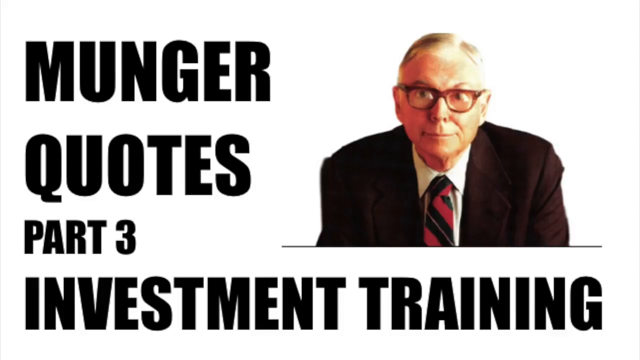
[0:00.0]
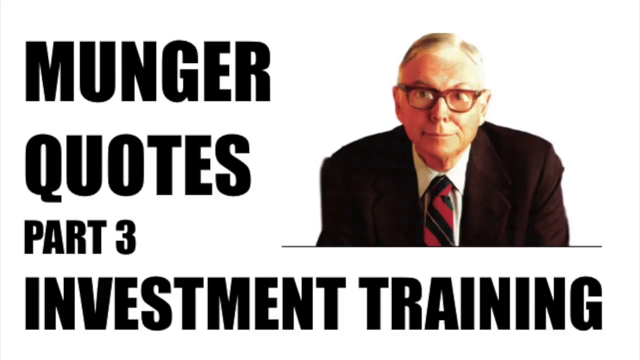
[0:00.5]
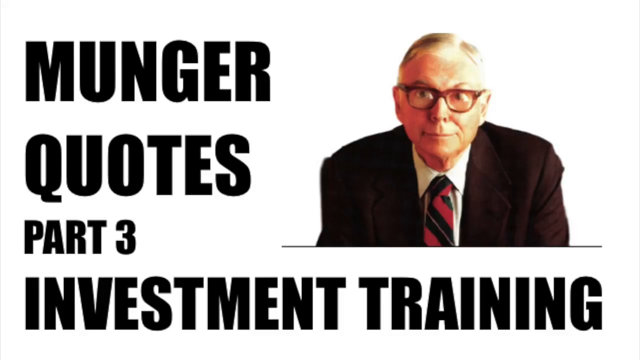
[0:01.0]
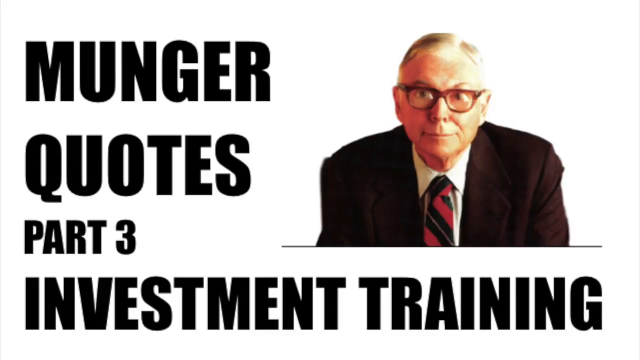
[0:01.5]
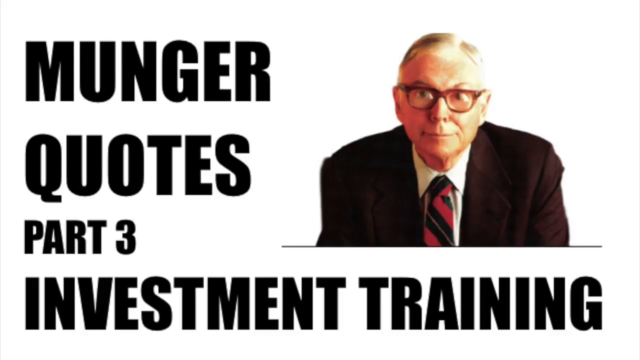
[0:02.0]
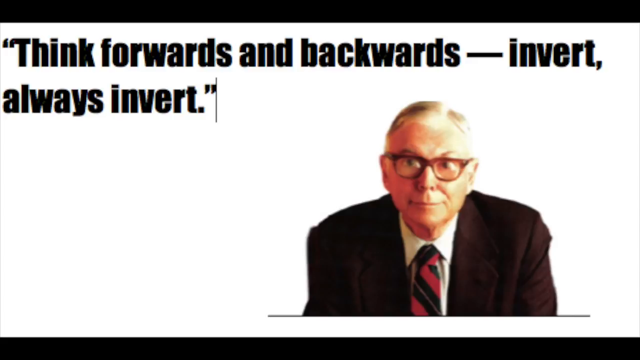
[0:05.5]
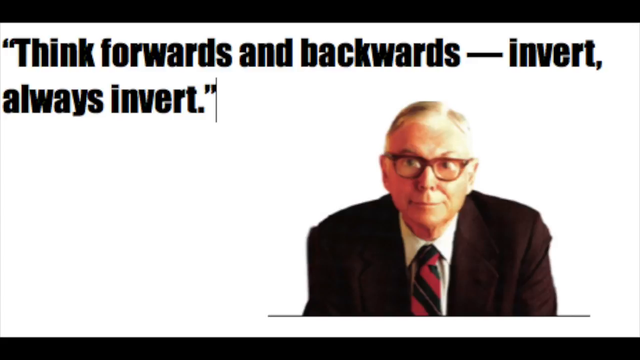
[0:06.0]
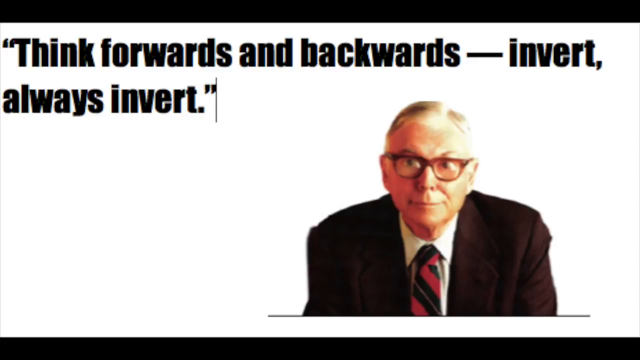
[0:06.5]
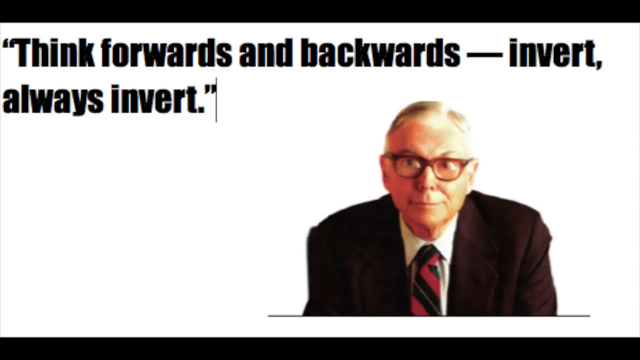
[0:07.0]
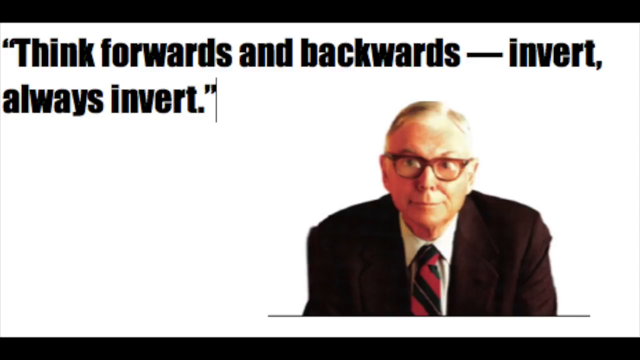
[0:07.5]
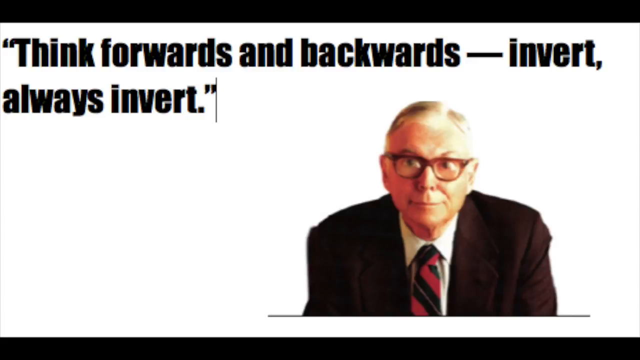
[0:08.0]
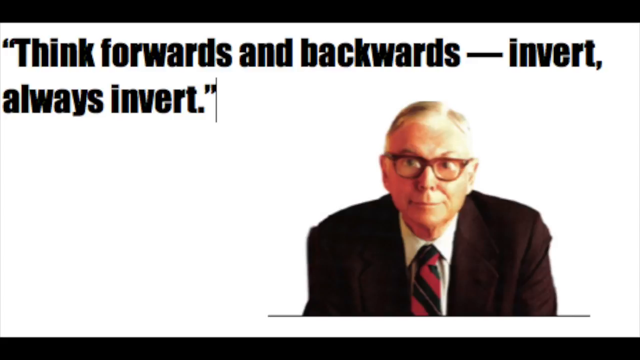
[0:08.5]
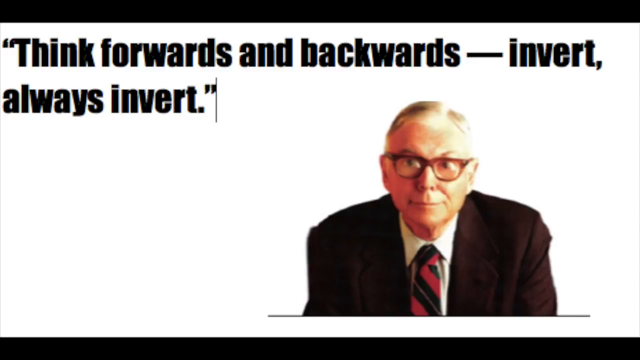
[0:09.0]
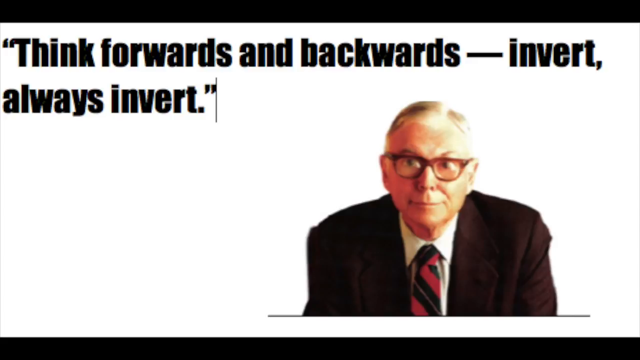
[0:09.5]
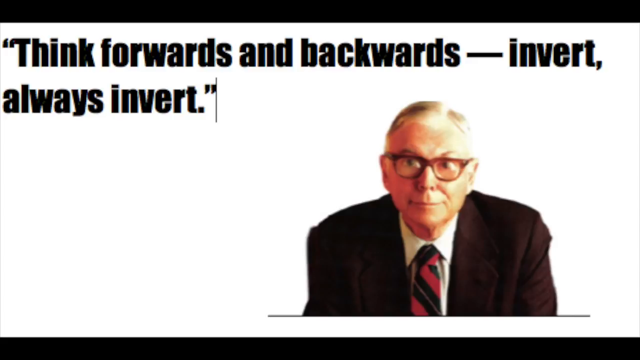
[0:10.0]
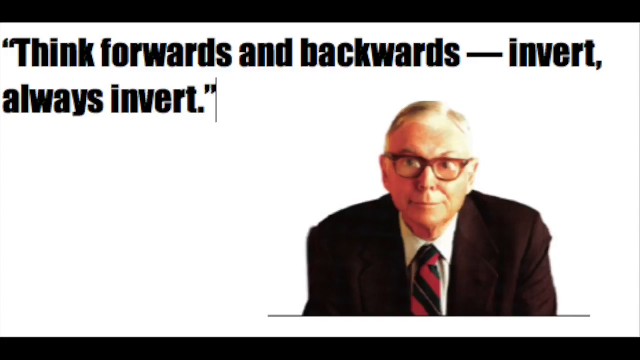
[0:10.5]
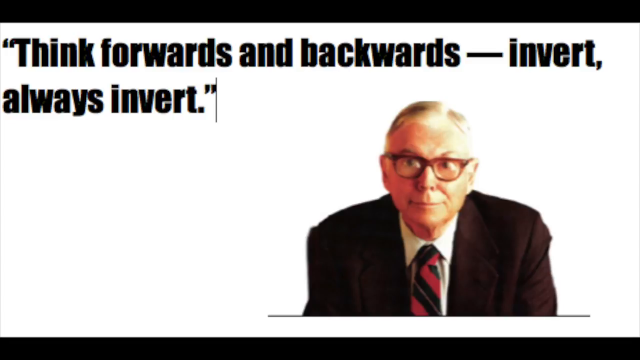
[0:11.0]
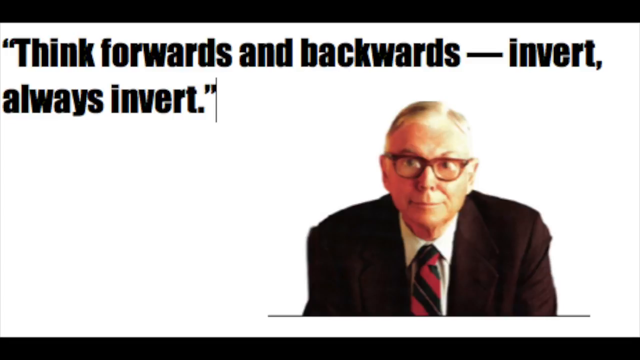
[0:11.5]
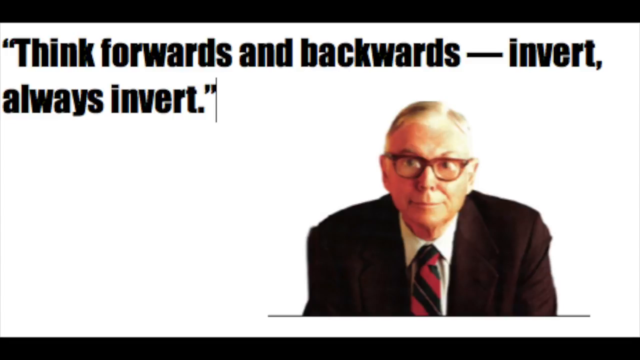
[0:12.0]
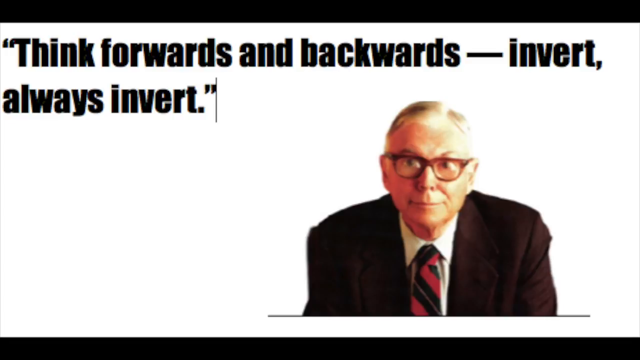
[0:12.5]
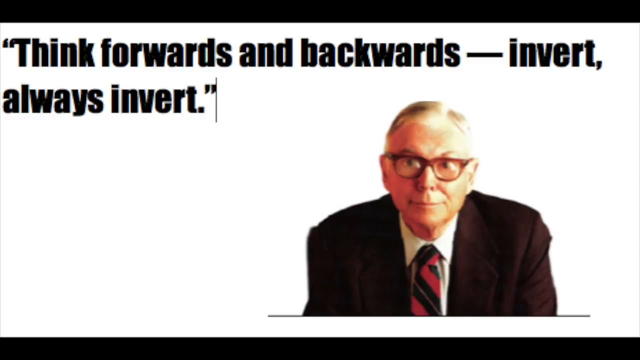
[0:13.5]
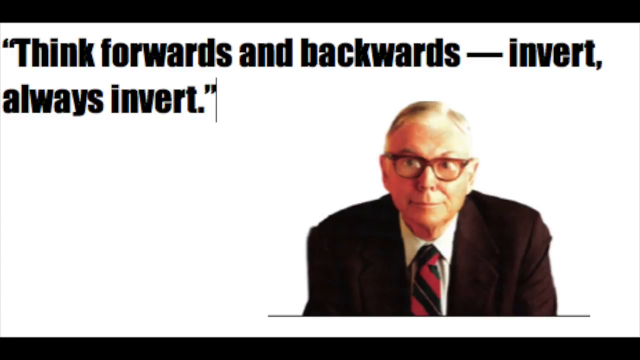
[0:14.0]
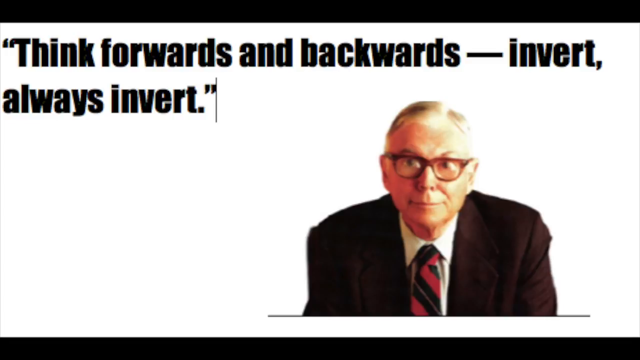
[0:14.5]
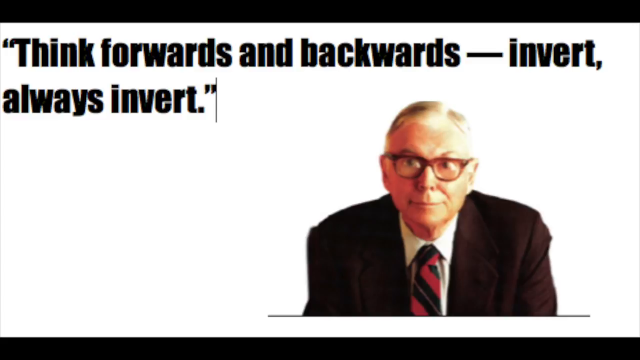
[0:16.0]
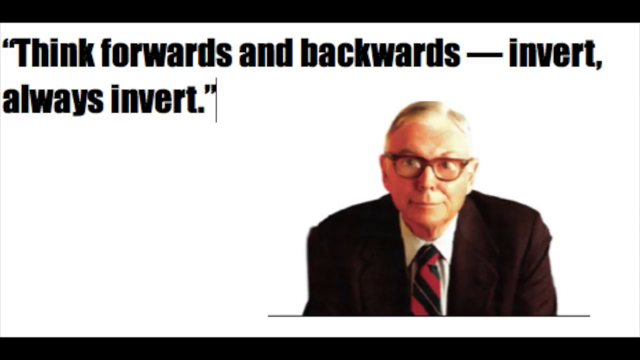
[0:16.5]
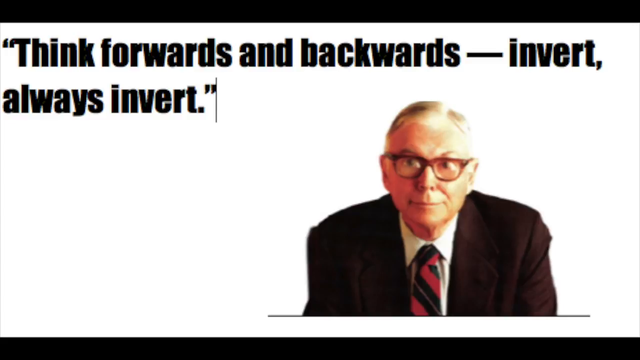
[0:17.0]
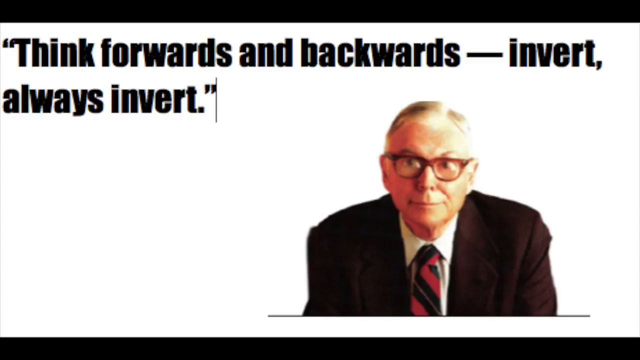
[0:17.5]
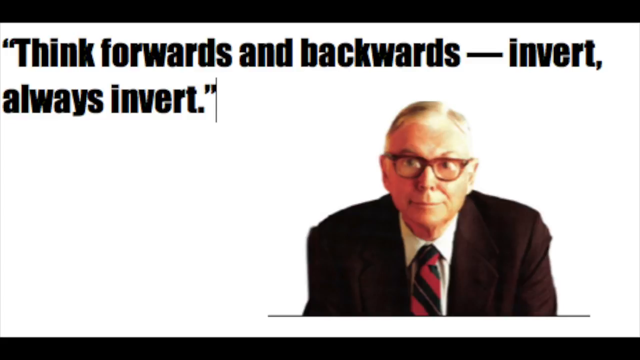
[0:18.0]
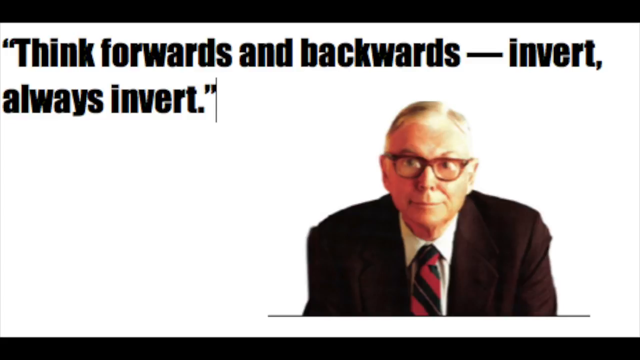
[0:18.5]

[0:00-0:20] A man leans forward toward the screen. He wears glasses, a suit, and a red tie with striped patterns in it, and the stripes and patterns of the tie don't match the suit. He has a look on his face that is hard to pin down. Most of the screen is a white background, with writing on the left side that reads "Munger quotes part 3 investment training." The message on the screen then changes to read "think forwards and backwards, invert, always invert."